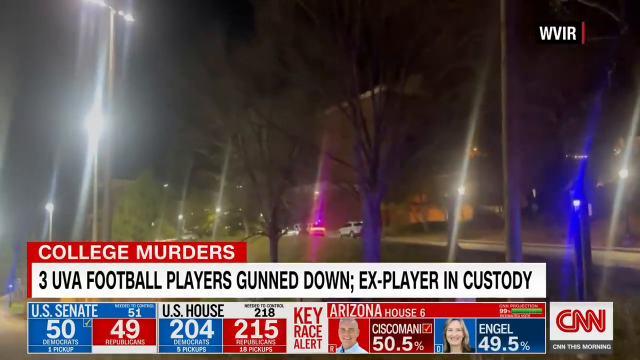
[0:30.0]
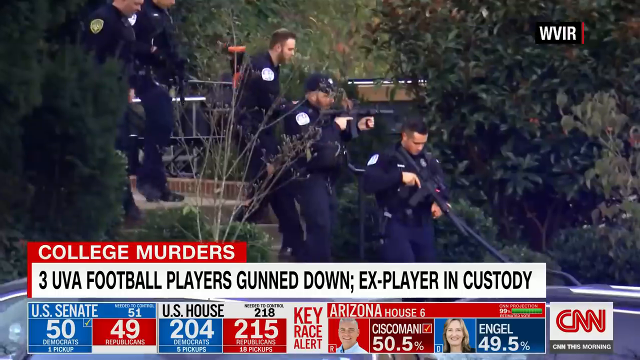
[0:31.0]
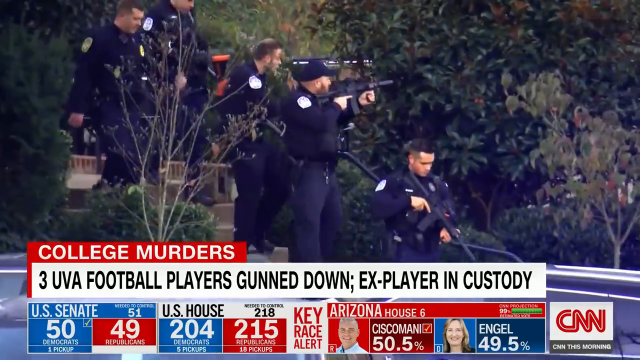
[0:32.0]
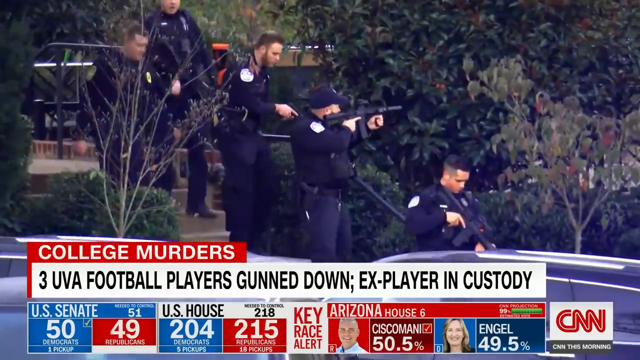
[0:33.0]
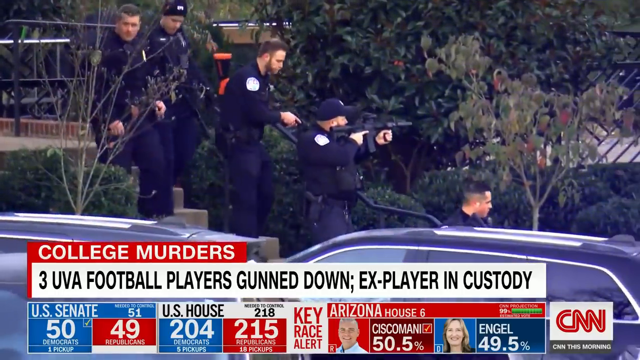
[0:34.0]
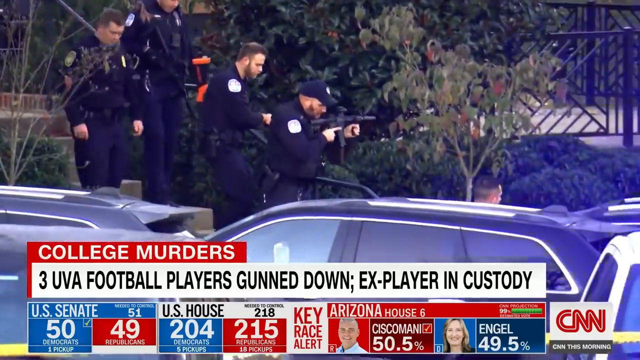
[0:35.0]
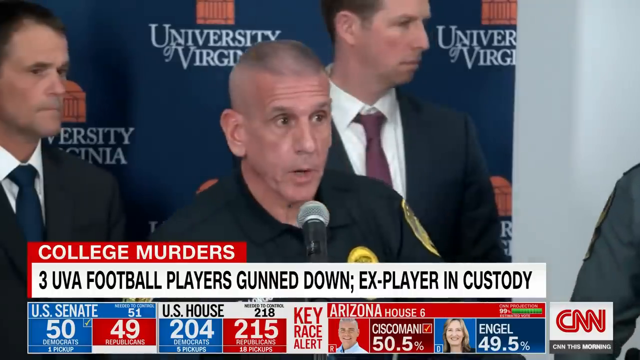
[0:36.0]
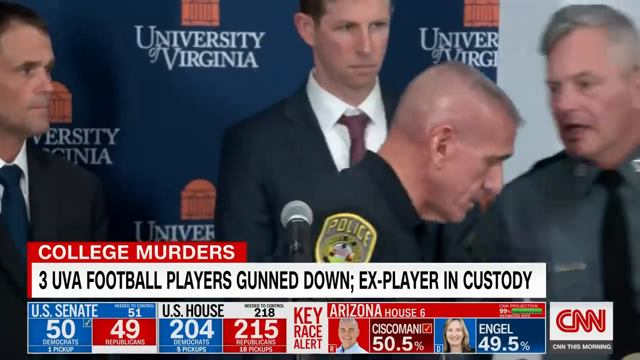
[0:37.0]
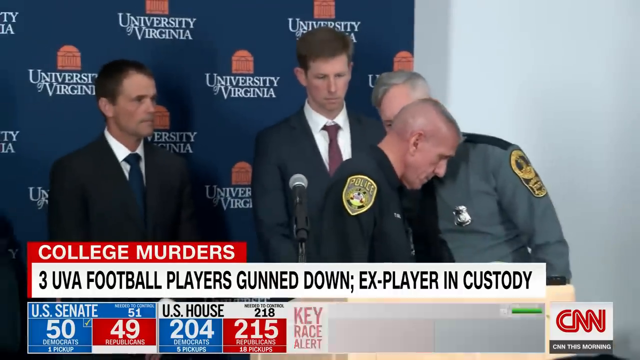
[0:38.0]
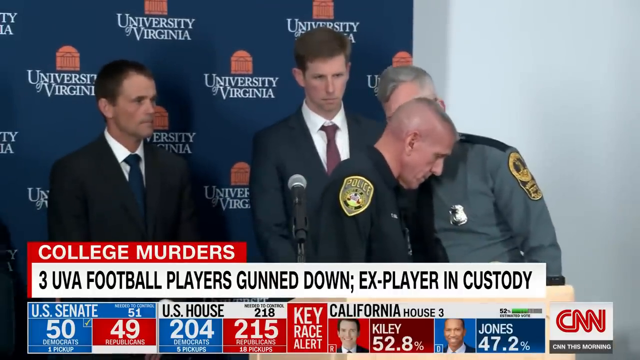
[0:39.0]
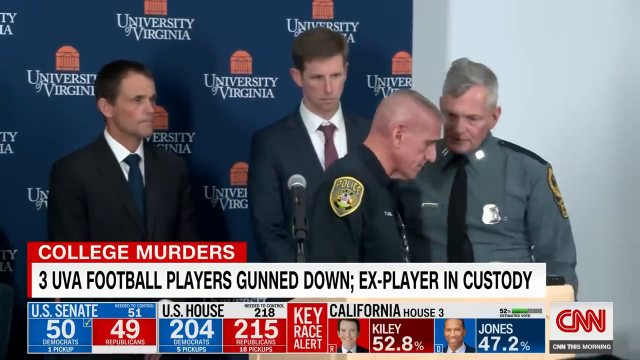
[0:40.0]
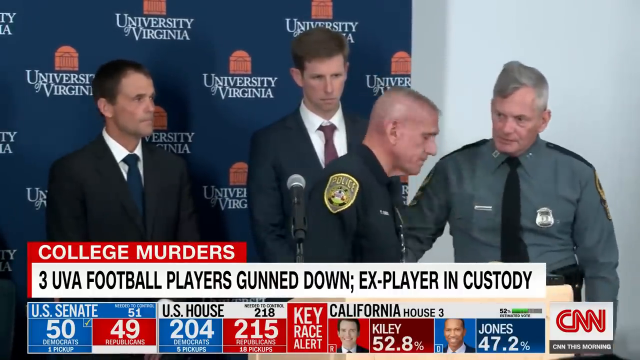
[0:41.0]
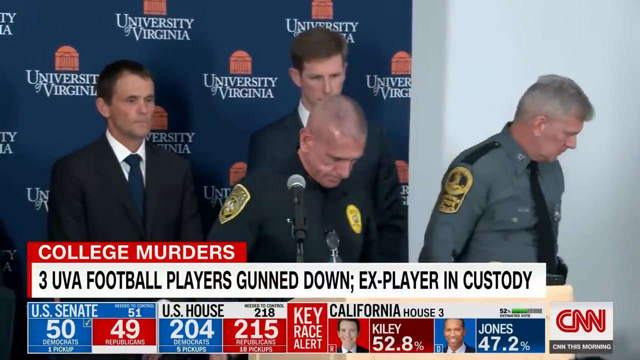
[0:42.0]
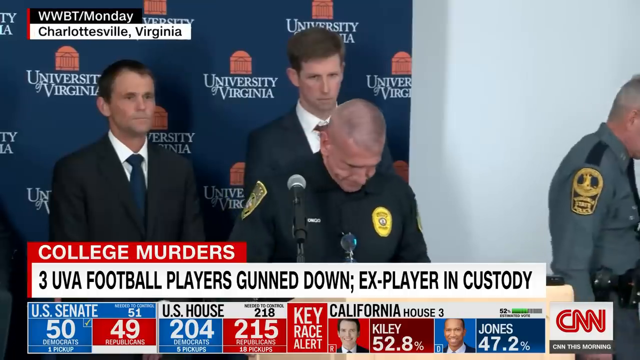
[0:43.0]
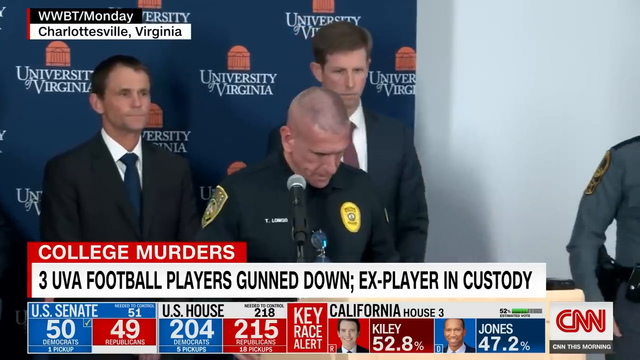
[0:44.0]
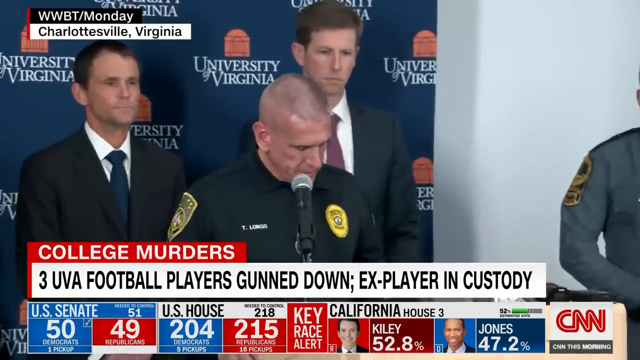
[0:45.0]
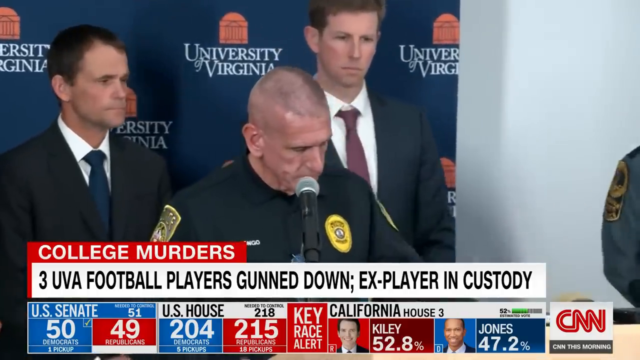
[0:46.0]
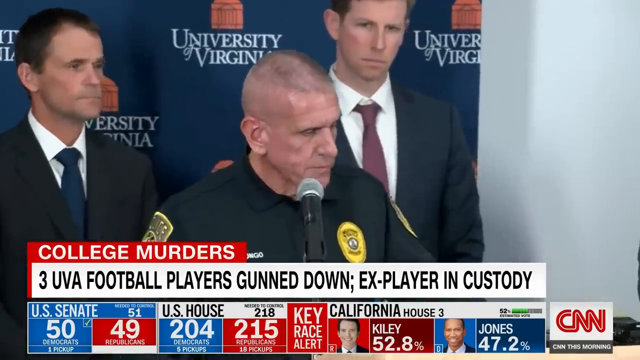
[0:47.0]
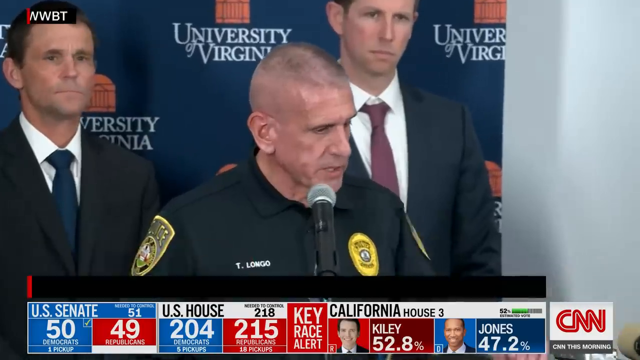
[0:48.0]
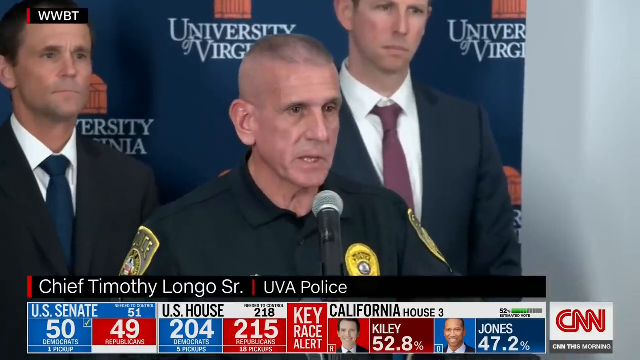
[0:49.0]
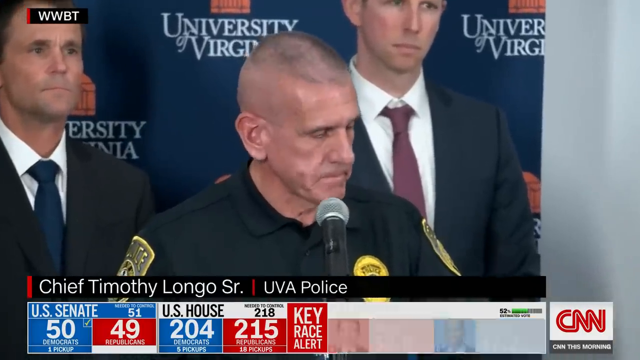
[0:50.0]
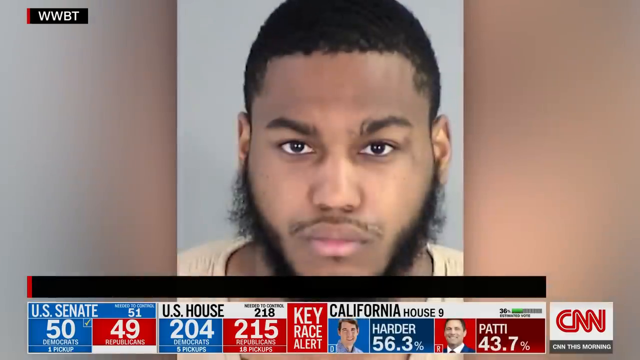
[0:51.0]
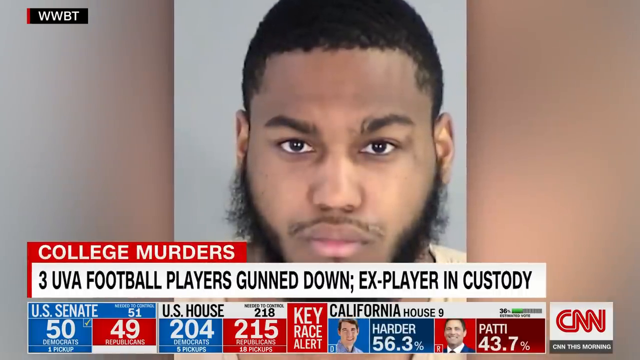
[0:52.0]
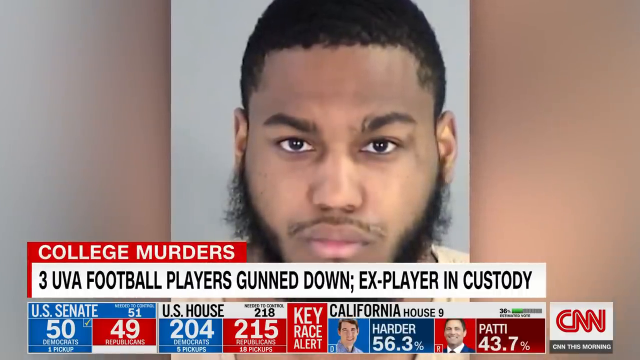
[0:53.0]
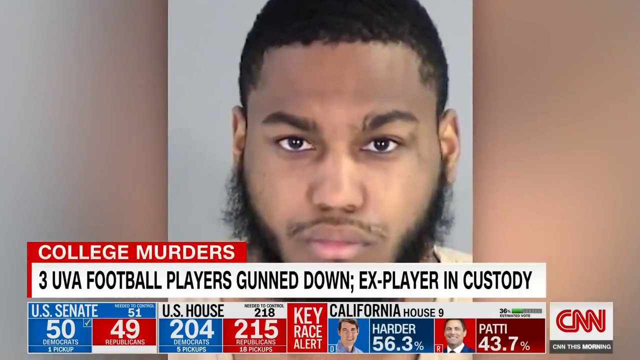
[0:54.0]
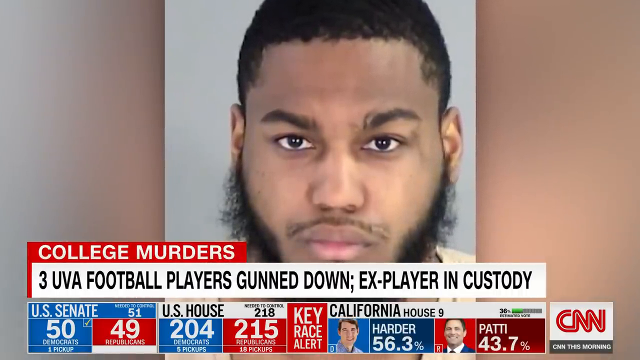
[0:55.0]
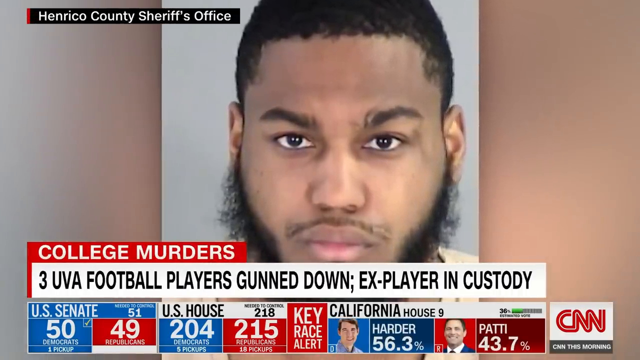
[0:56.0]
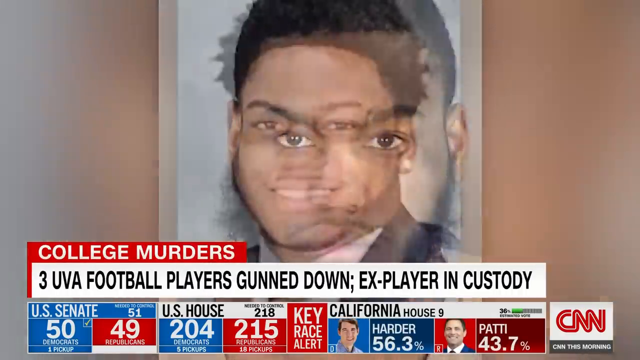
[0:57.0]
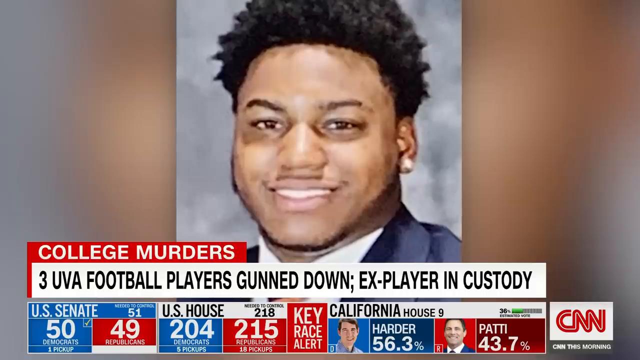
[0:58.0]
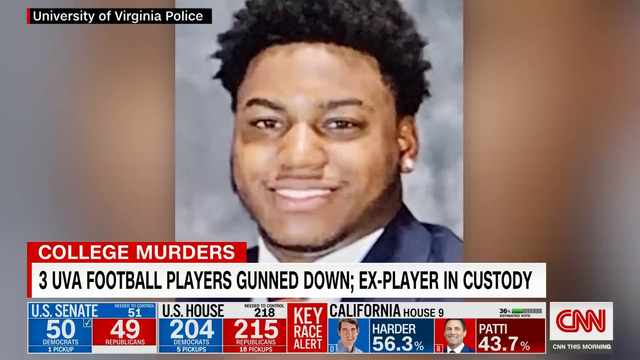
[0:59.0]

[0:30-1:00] CNN covers the news story titled "College Murders," and underneath, the headline reads "Three UVA football players gunned down, ex-player in custody." A group of five police officers in dark uniforms with silver badges on their arms, some wearing hats, look like they could be a SWAT team. The two leading the group down some stairs on the college campus, surrounded by shrubbery, hold large black machine guns, and one of them points his gun into the bushes as if still watching for risks. At the very bottom of the screen, election results are shown for the Arizona House, and the U.S. House results show 204 for Democrats and 215 for Republicans. The CNN logo is in the bottom right corner of the screen, in red continuous lettering against a white background.